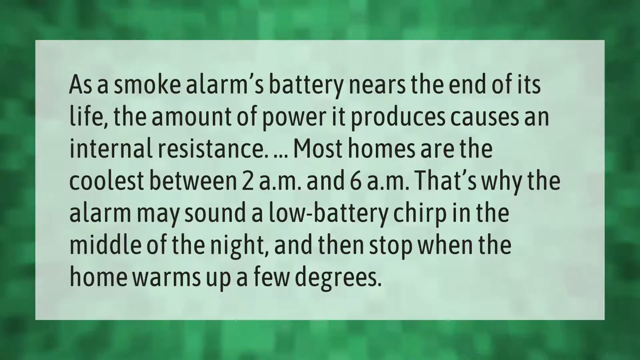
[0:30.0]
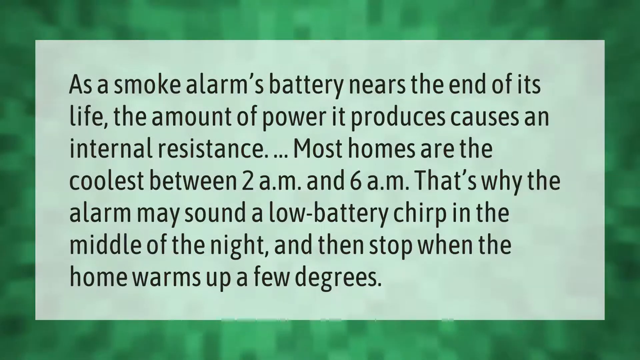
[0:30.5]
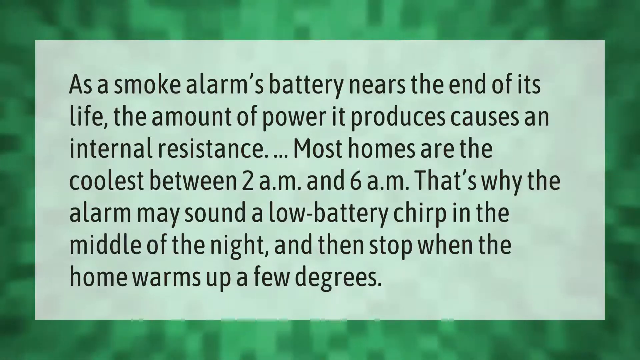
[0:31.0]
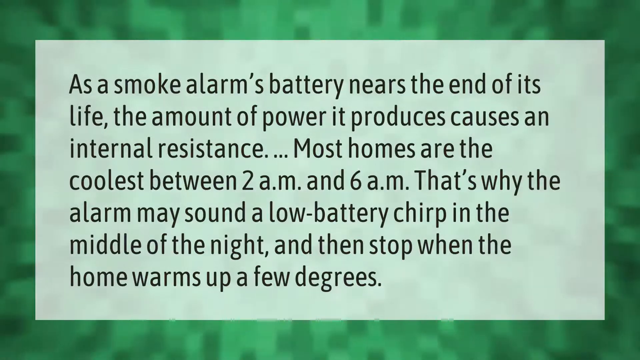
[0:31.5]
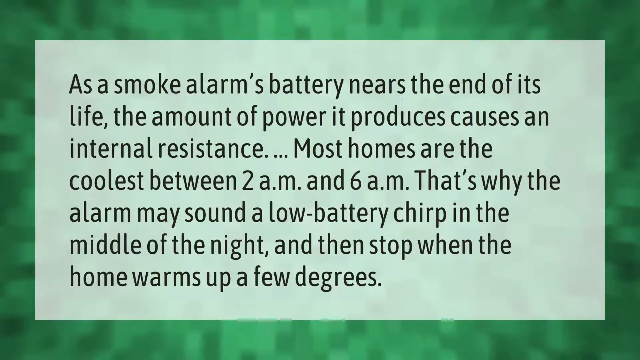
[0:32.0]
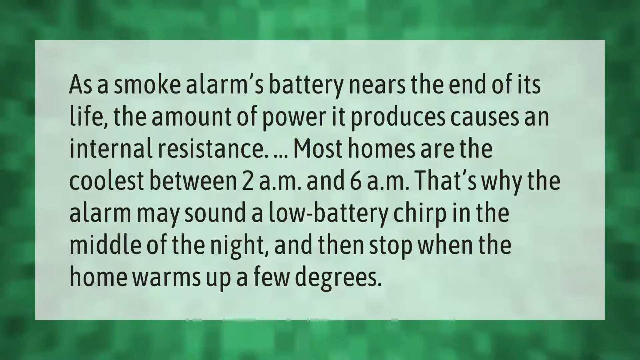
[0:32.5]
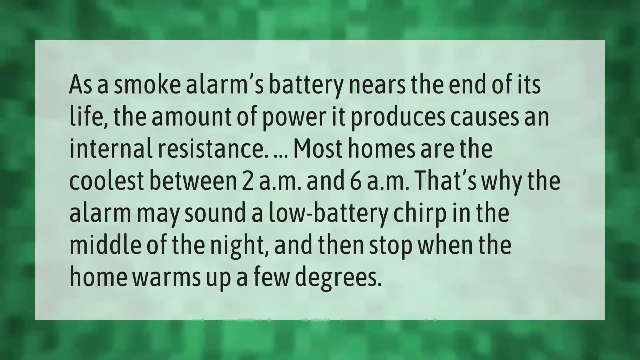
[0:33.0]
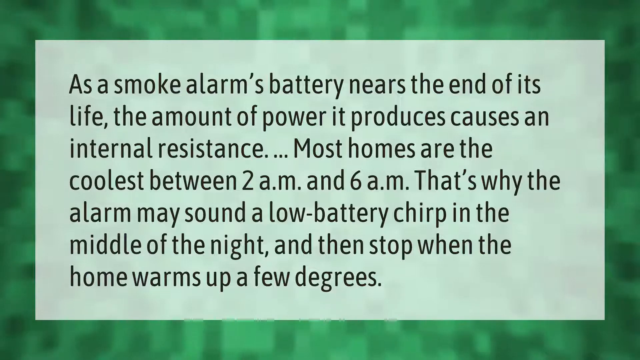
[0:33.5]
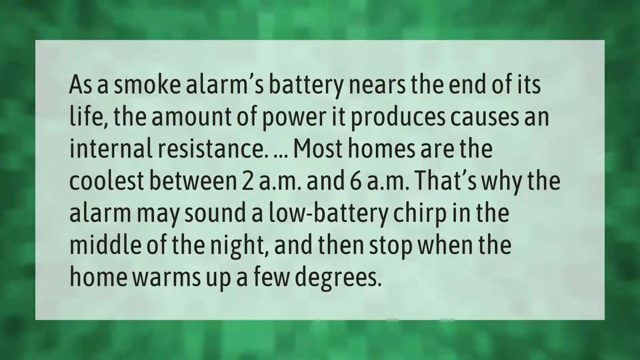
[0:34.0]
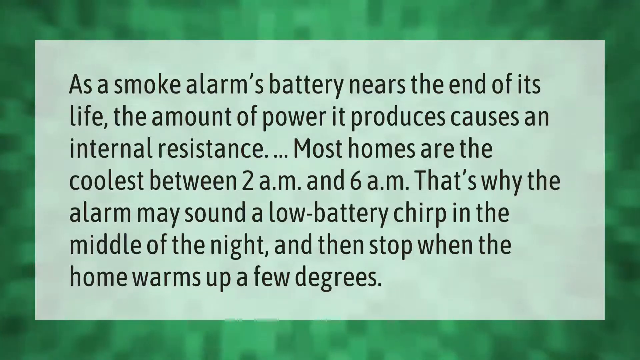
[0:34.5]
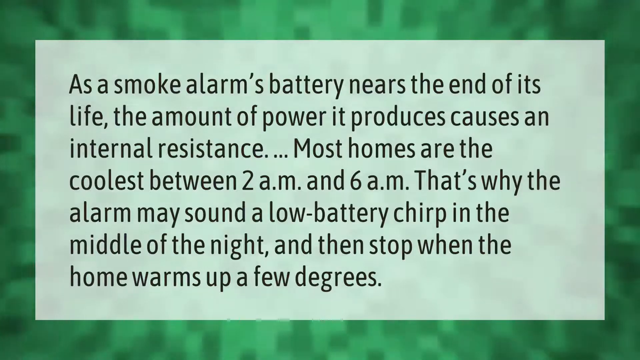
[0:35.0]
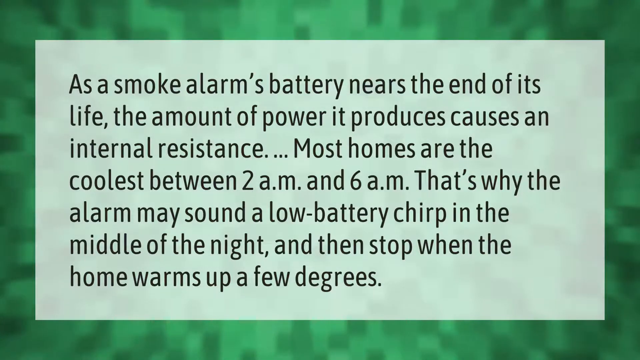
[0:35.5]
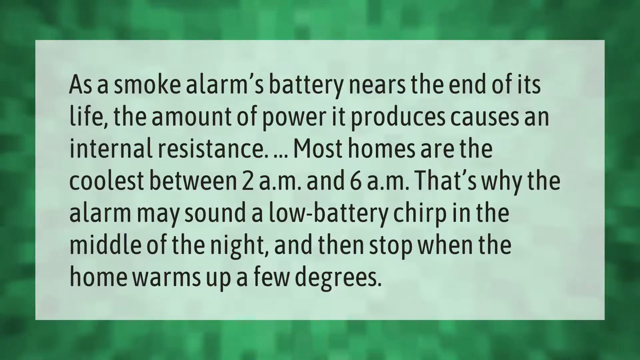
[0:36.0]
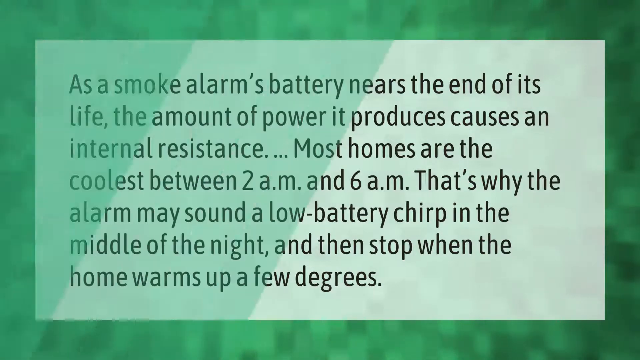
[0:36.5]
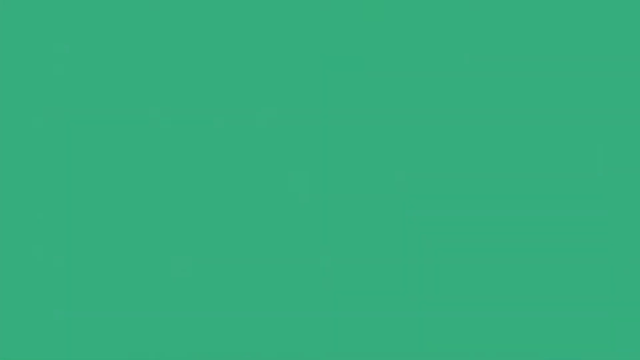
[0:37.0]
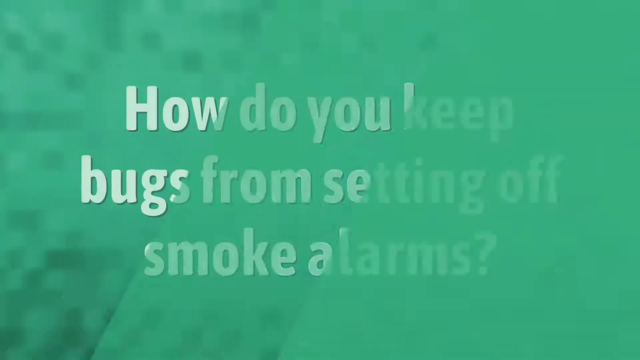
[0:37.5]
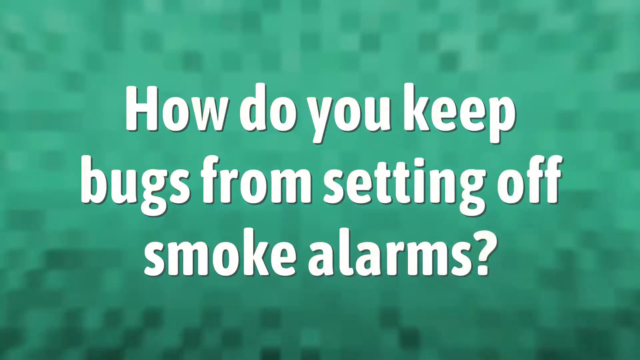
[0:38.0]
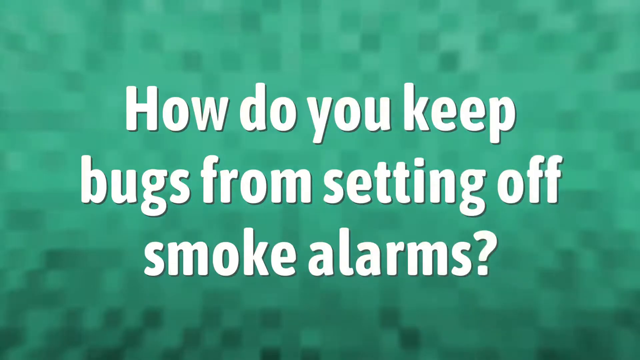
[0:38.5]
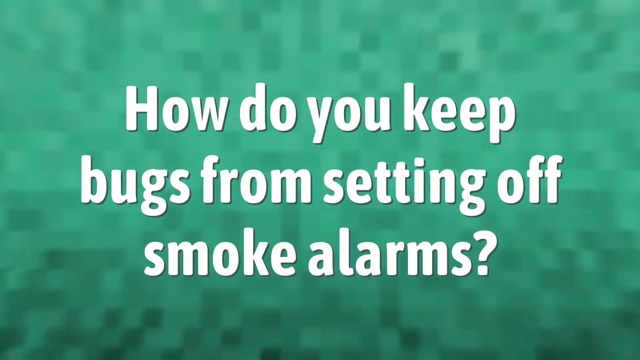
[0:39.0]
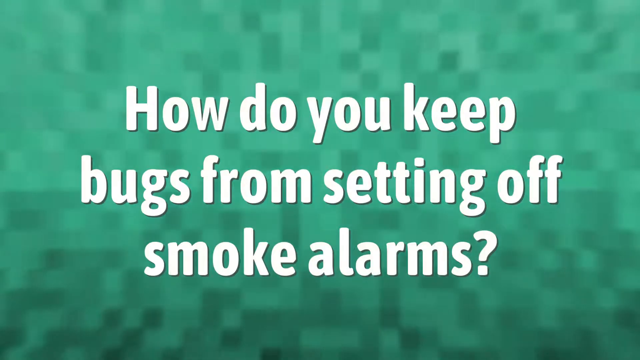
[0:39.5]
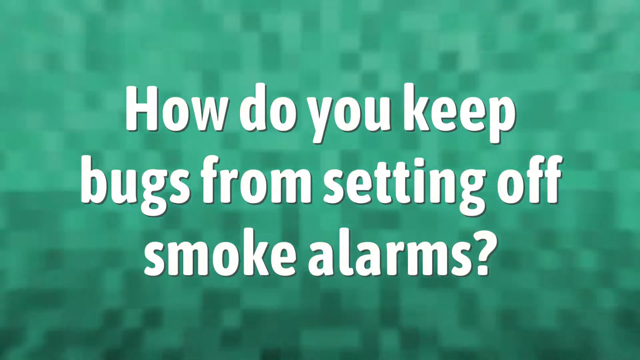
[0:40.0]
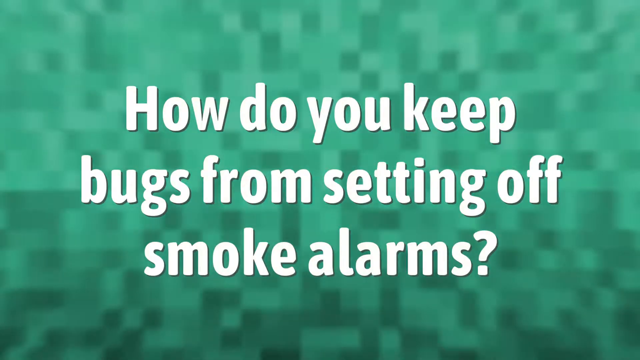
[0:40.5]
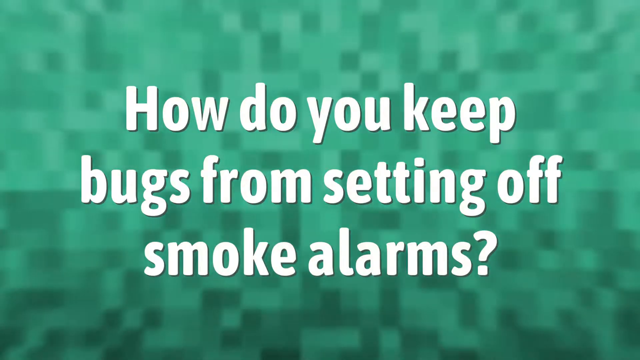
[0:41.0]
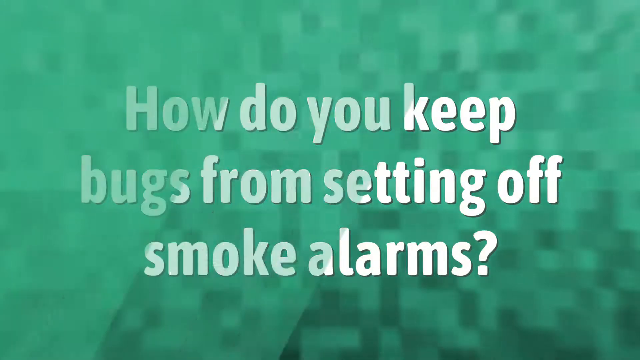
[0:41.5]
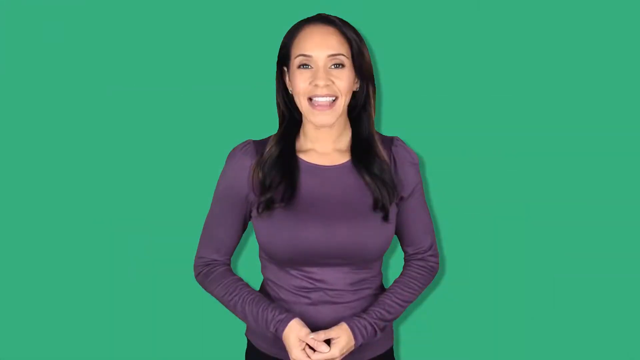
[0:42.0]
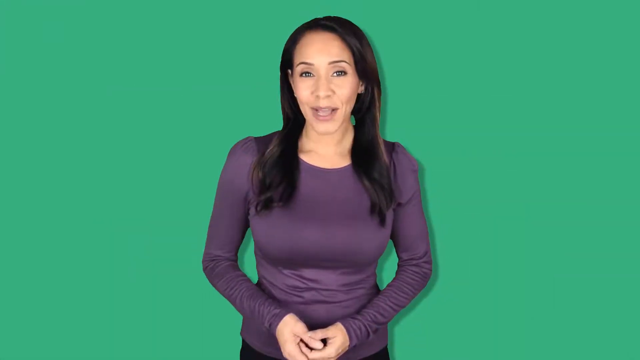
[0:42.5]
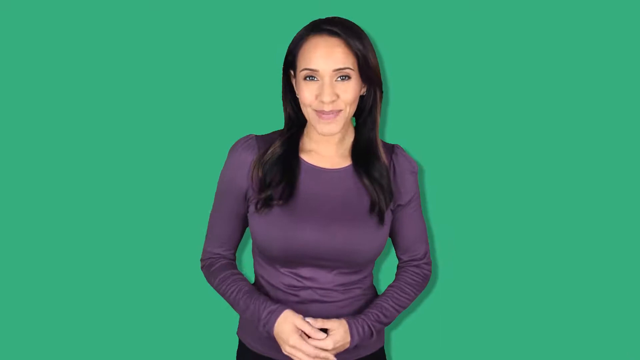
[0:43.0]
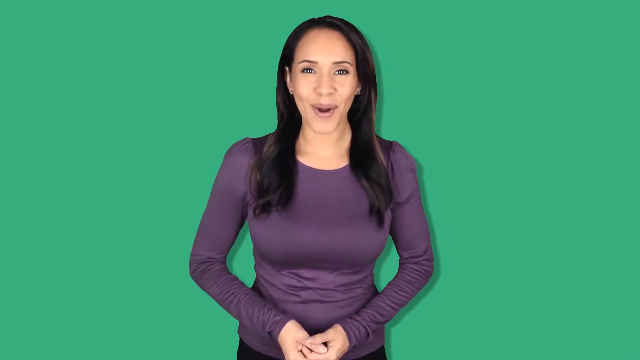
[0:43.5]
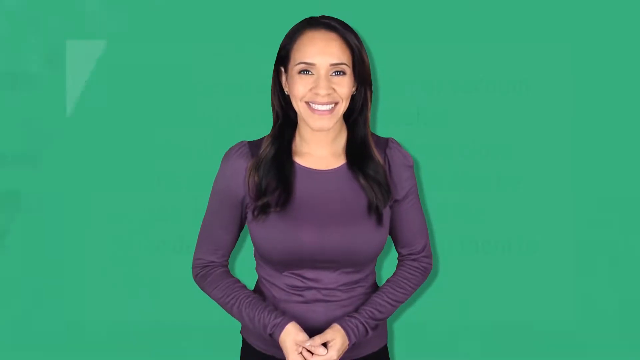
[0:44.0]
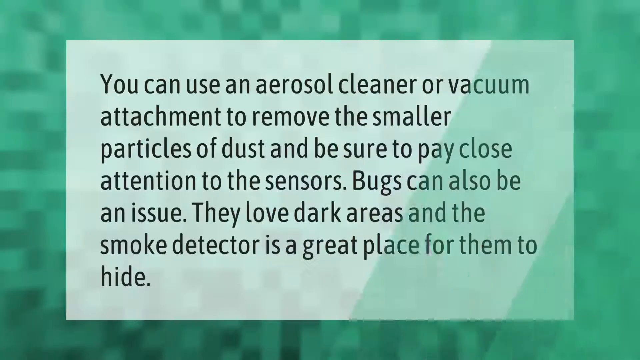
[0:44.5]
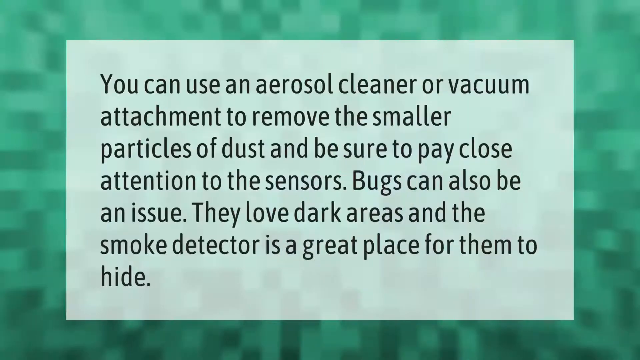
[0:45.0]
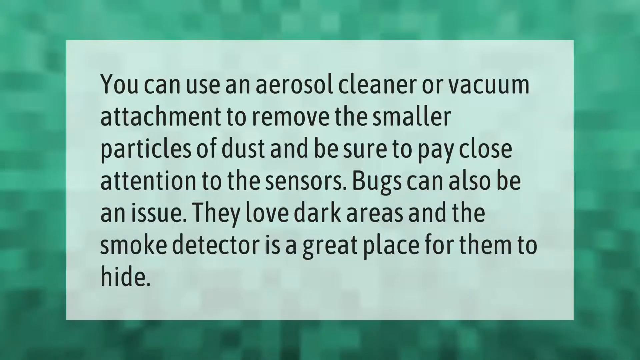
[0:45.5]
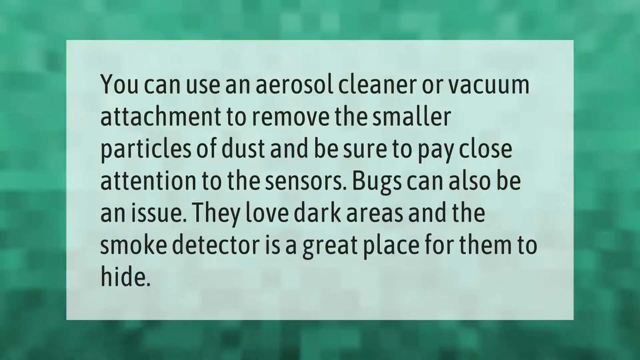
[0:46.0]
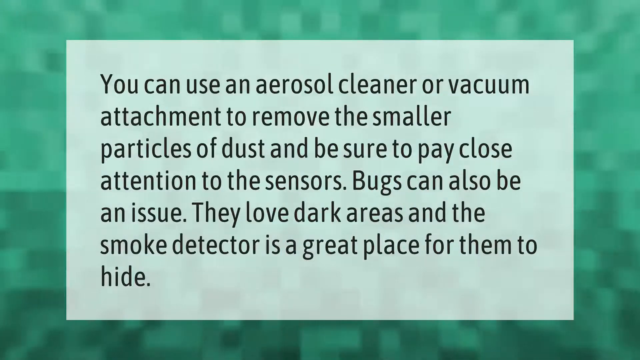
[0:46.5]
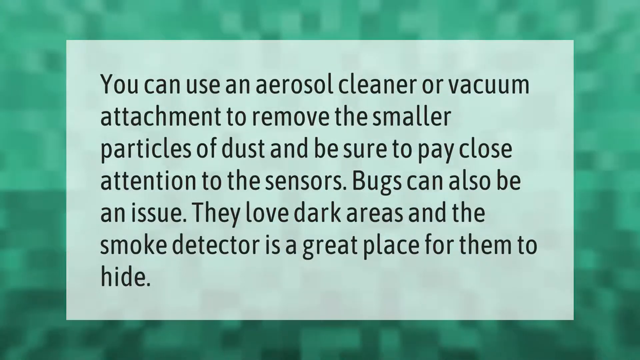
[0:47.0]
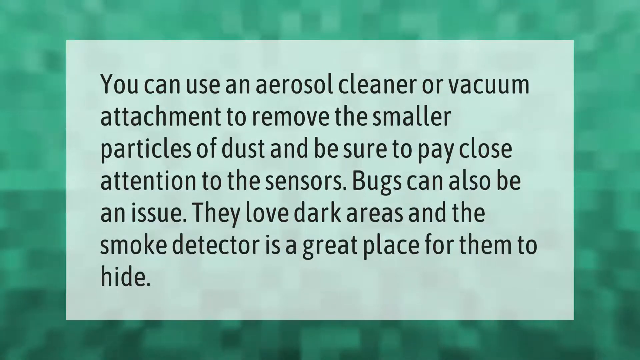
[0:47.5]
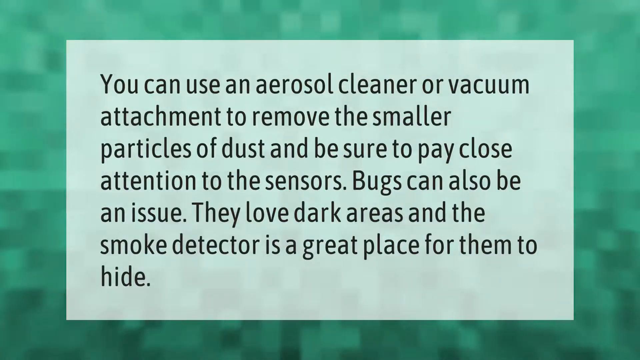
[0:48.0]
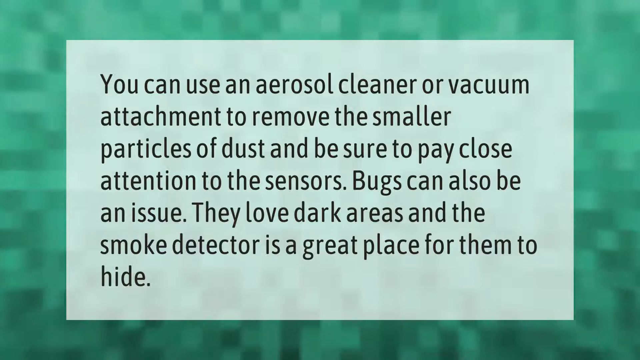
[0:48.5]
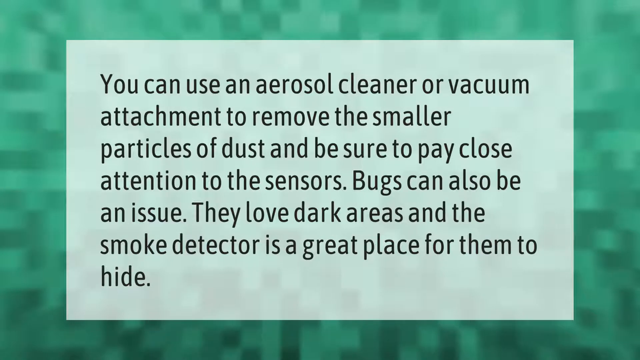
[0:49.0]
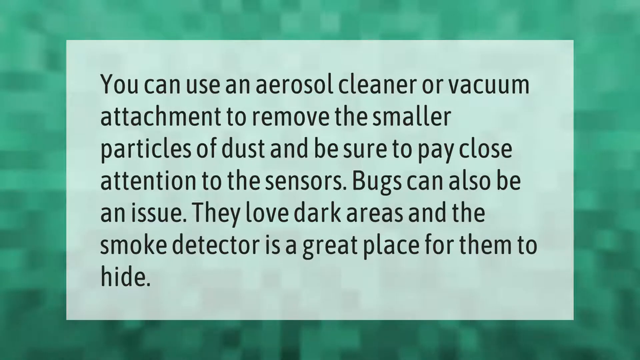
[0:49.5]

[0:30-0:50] A green screen shows, in bold white letters, "How do you keep bugs from setting off smoke alarms?" It switches to the woman standing in front of a green screen, wearing a purple shirt, with dark brown hair; she smiles and looks intently into the camera as she speaks directly into it. The next screen has a green background with a lighter green area and says "You can use an aerosol cleaner or vacuum attachment to remove the smaller particles of dust and be sure to pay close attention to the sensors. Bugs can also be an issue. They love dark areas and the smoke detector is a great place for them to hide." It stays on this screen for a moment.